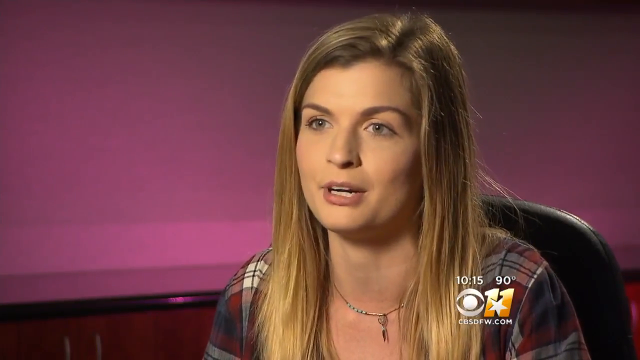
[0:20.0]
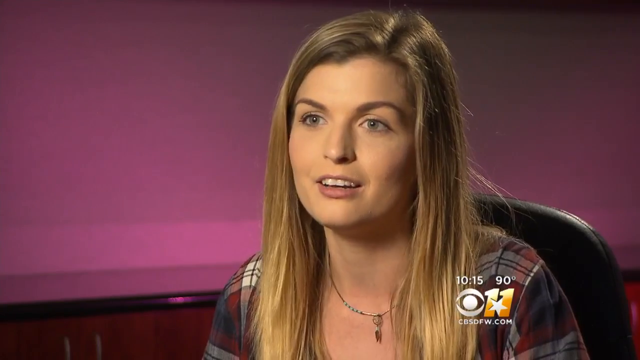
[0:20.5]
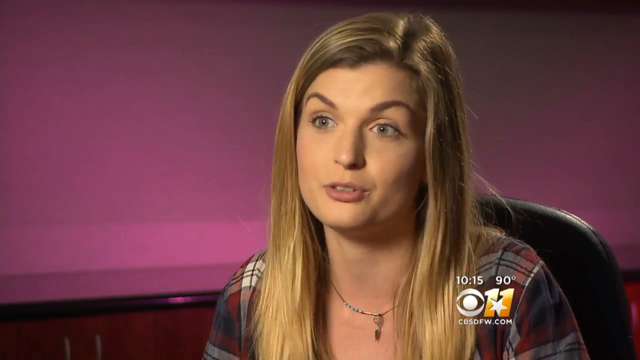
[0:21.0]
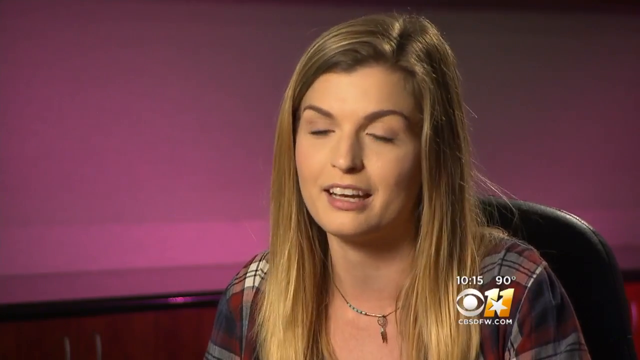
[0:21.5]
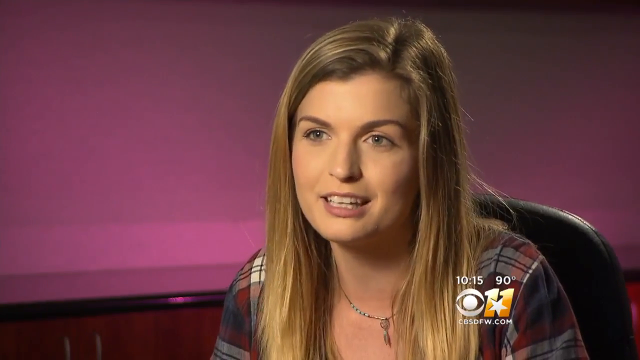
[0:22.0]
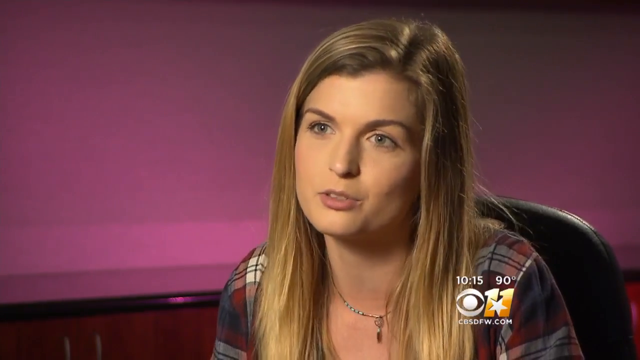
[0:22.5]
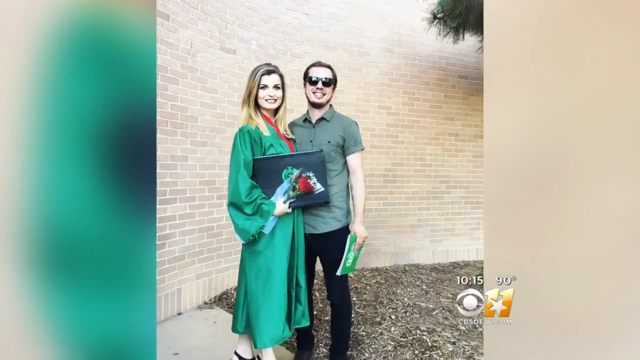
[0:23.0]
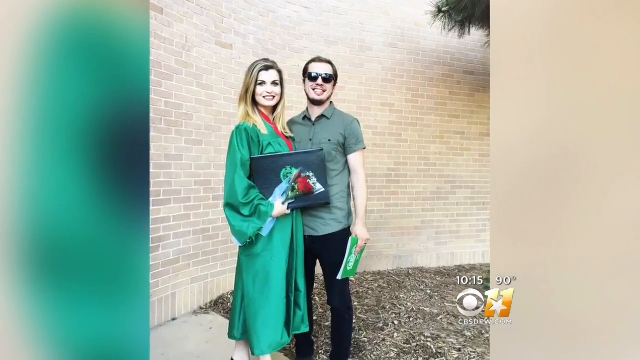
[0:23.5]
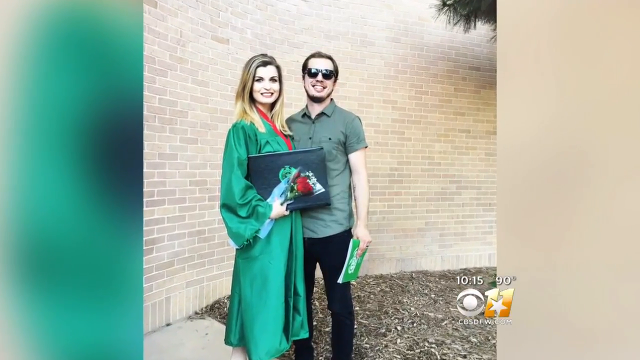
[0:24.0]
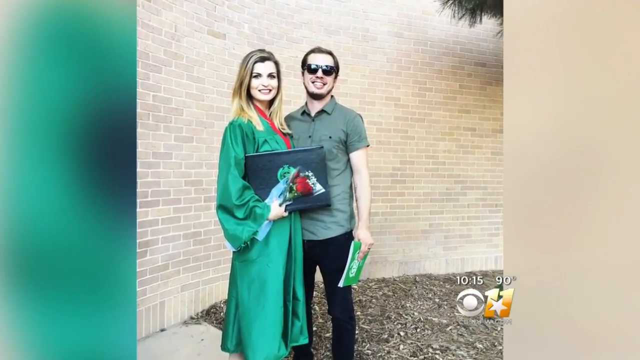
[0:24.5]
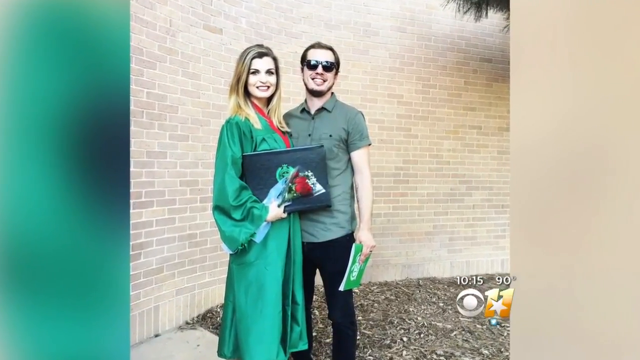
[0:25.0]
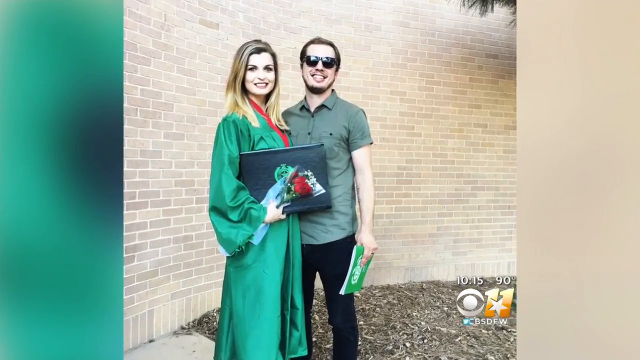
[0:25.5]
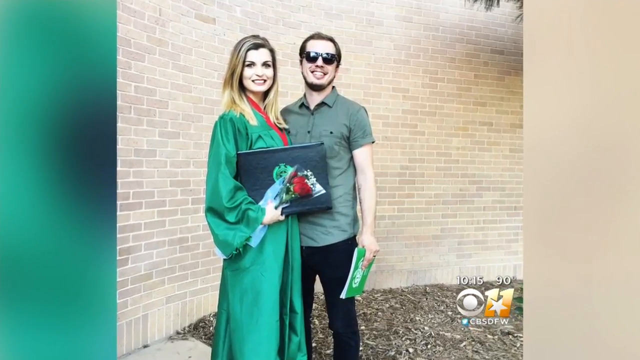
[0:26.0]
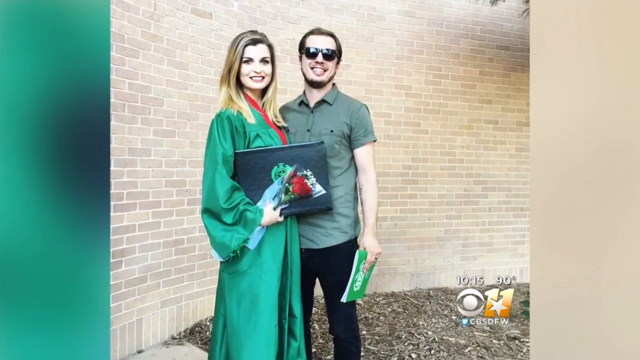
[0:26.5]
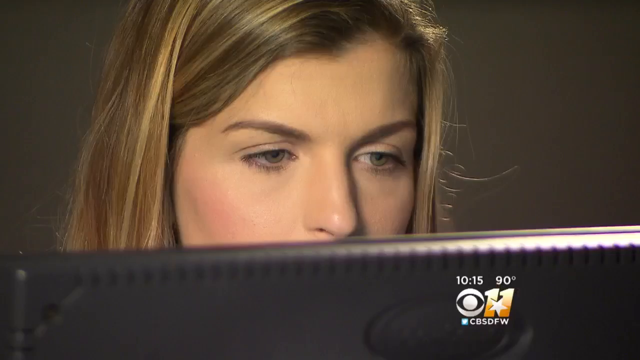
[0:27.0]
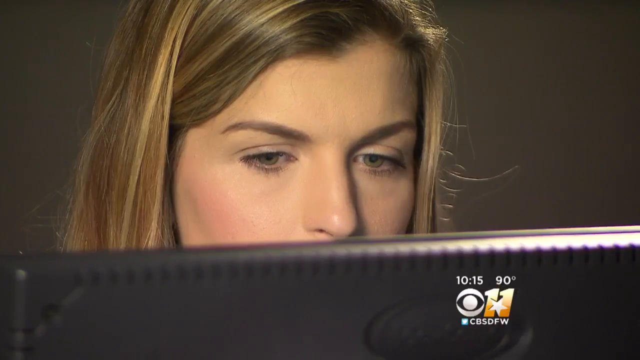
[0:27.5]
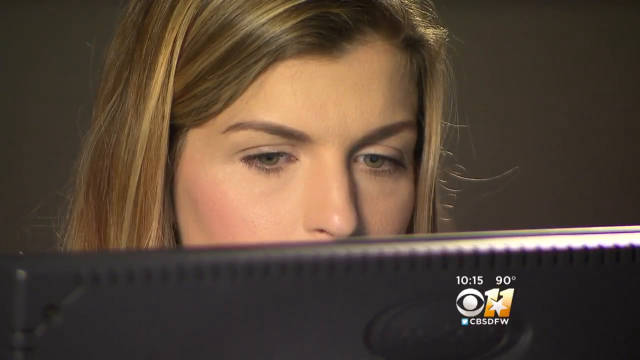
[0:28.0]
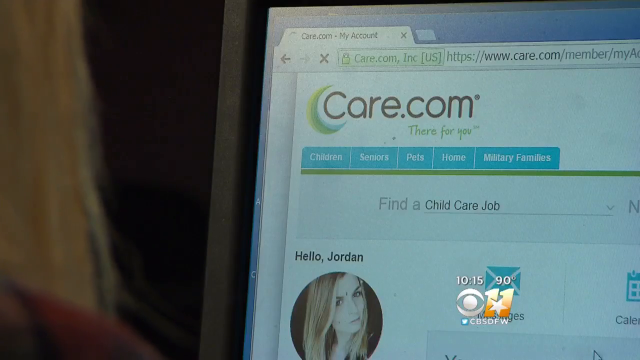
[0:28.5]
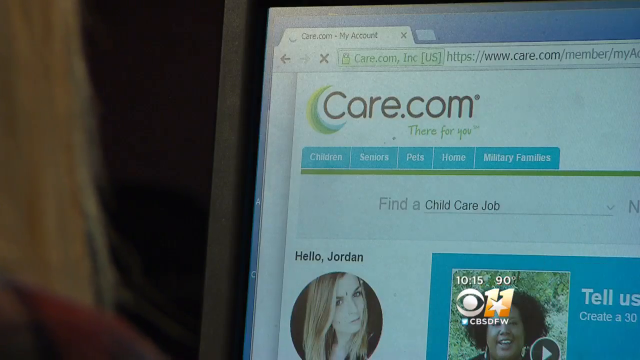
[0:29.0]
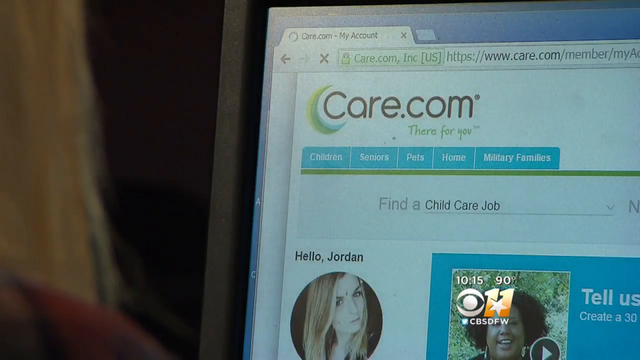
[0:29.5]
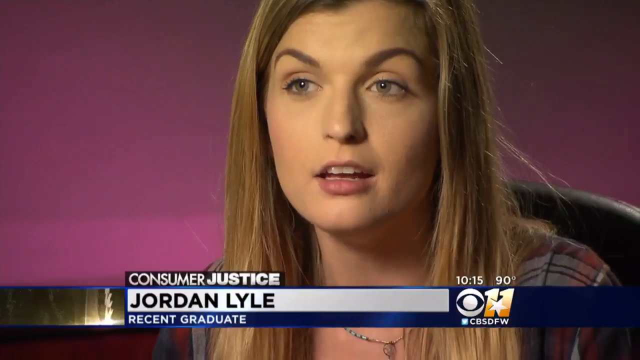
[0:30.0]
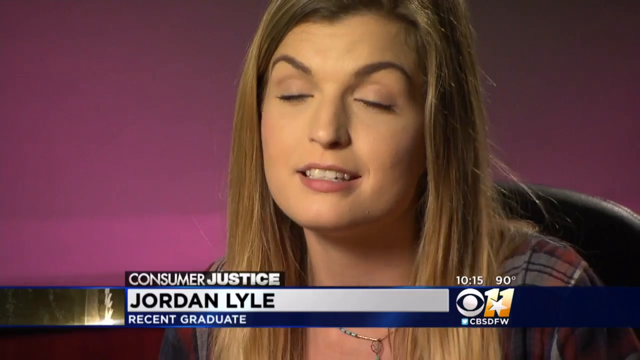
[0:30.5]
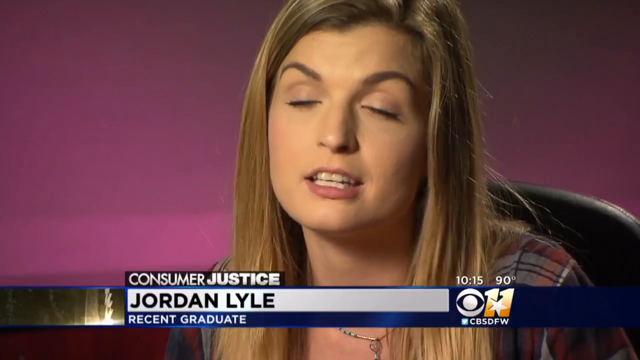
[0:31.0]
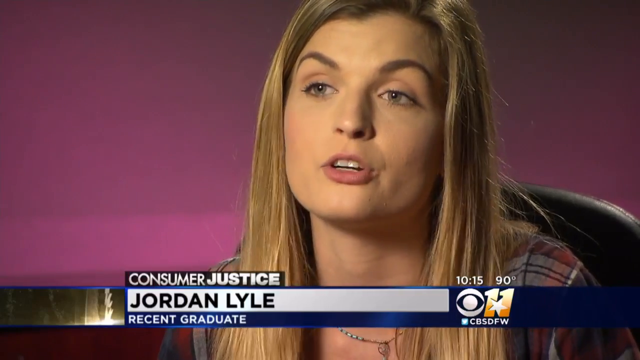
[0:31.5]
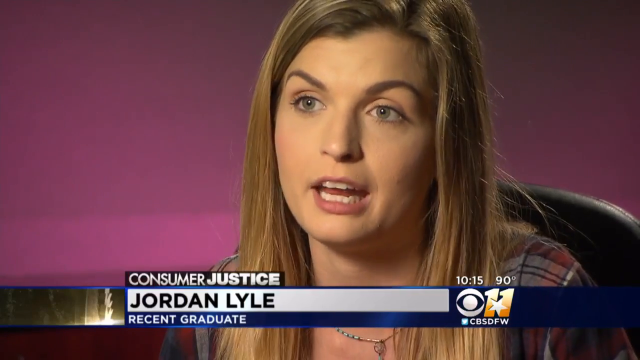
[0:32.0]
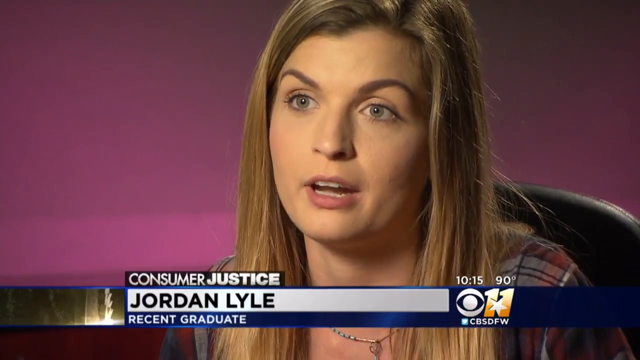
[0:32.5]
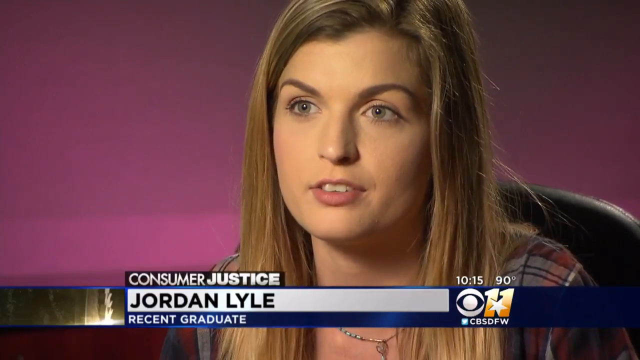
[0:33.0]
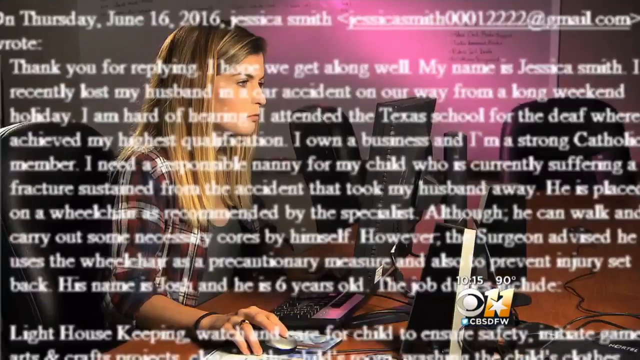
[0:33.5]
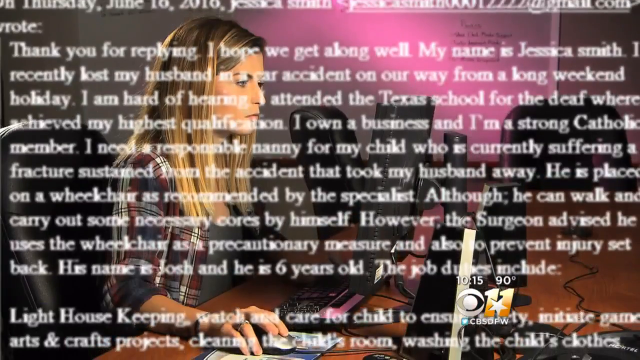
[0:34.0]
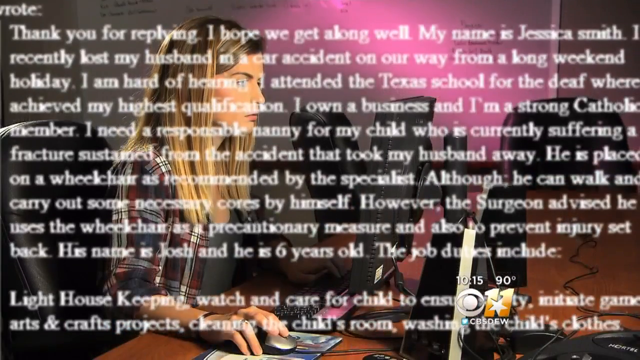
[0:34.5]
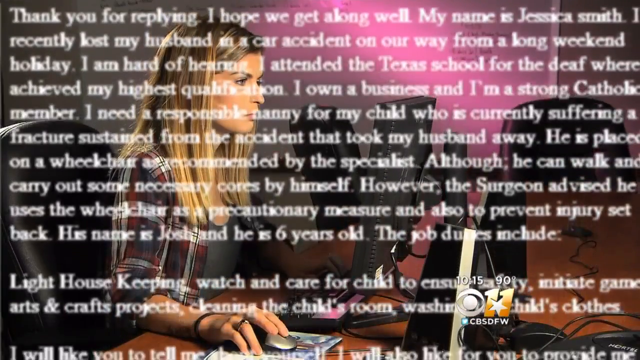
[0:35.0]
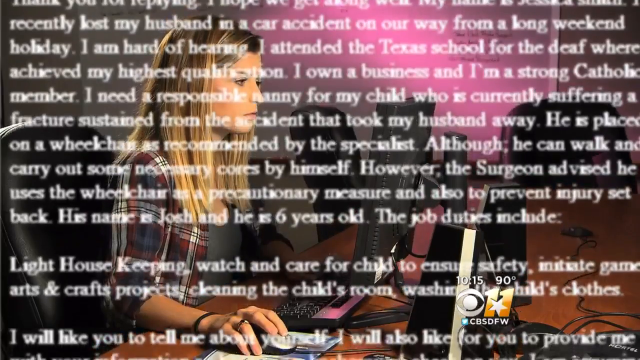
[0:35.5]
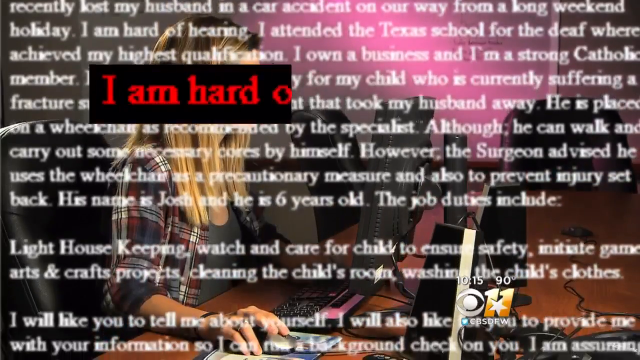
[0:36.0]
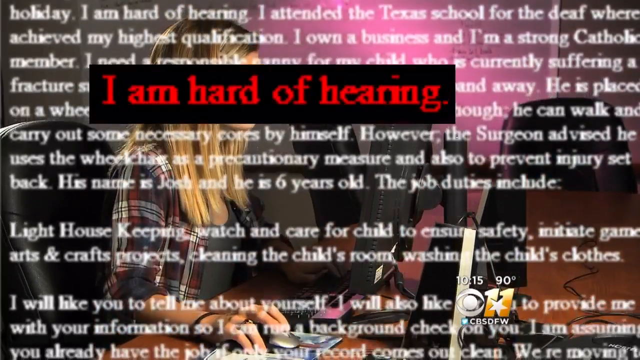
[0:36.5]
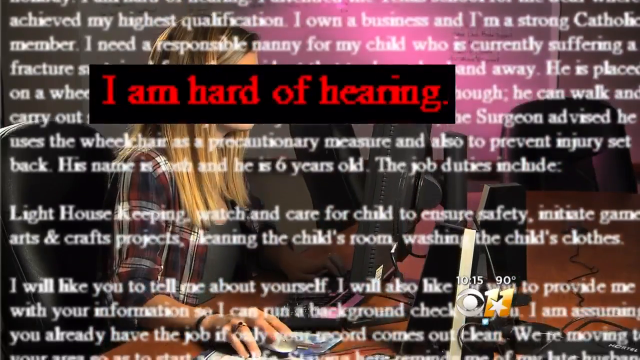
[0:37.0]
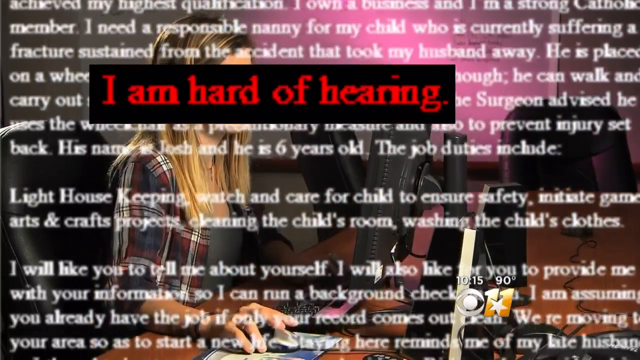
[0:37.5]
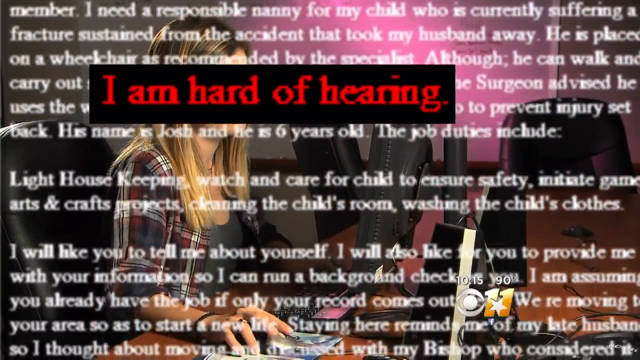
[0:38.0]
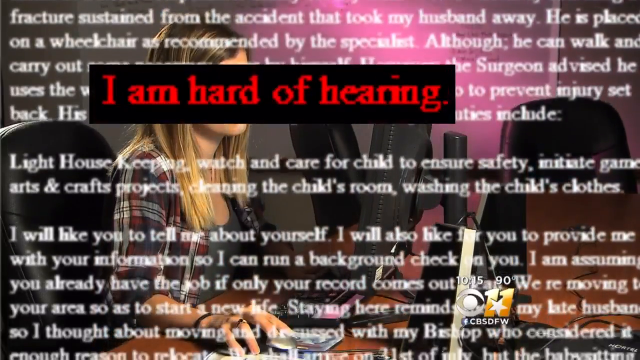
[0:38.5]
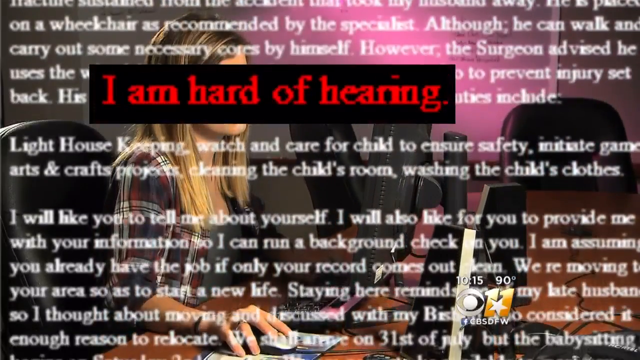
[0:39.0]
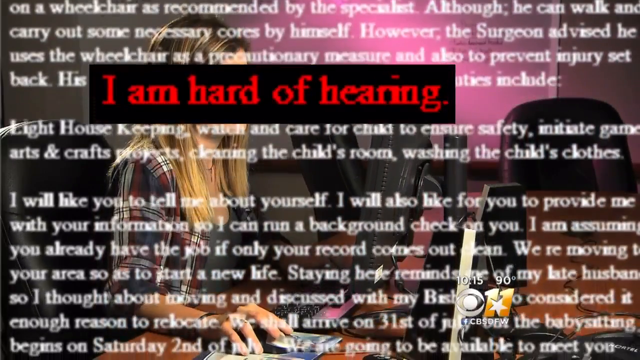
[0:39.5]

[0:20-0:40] The female, who is Caucasian with sort of dirty blonde hair and probably around 30, continues to be shown. Another screen shows her in a sort of dress with a male next to her who has sunglasses, short brown hair and kind of blue jeans. She is then shown looking at a website on the screen in front of her. The video returns to the original setting, where care.com is seen along with a webpage with child care text: "child care, I'll find a child care job, pets, home, military families, hello Jordan." A caption relates to CBS News coverage of a recent graduate in the job market for the consumer justice segment. Blurry white text appears in the background, followed by bolded red text on the screen reading "I am part of hearing."